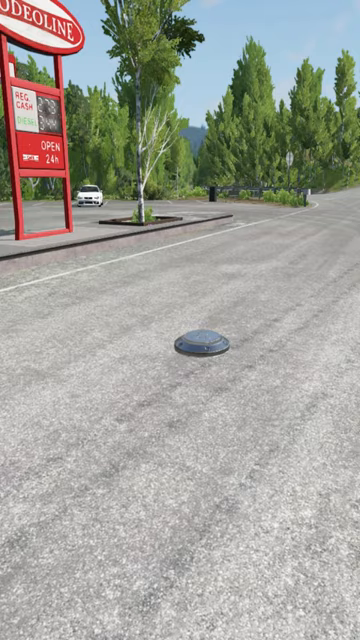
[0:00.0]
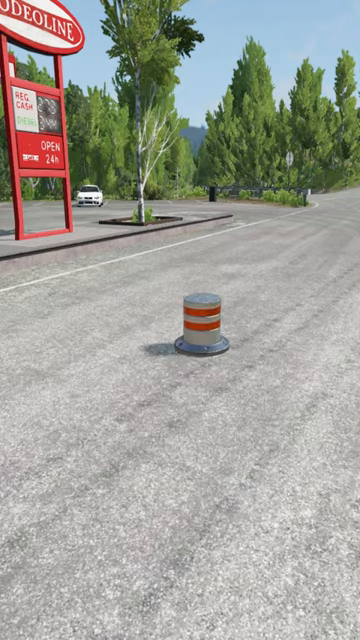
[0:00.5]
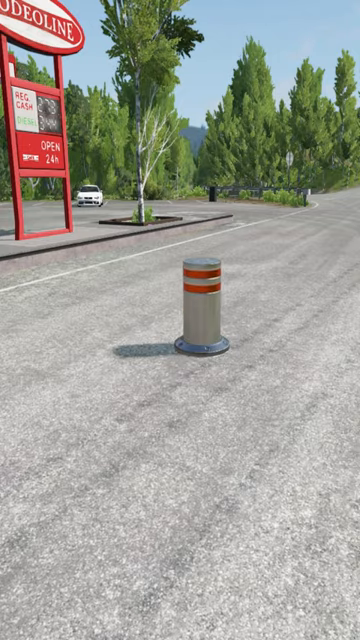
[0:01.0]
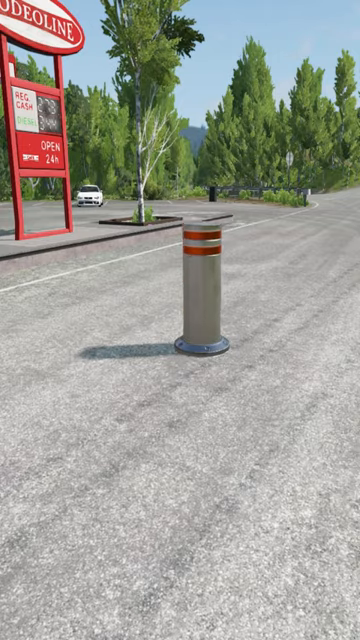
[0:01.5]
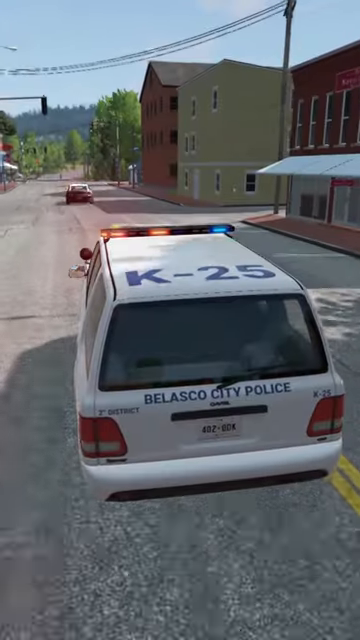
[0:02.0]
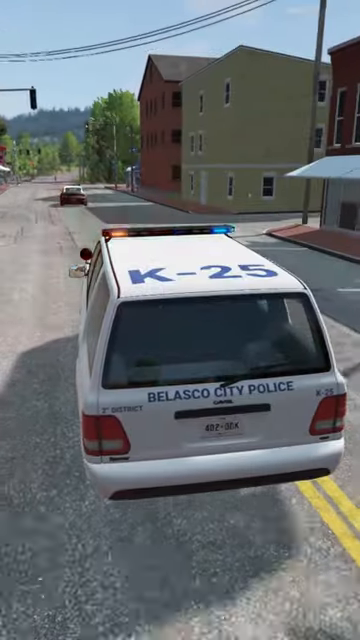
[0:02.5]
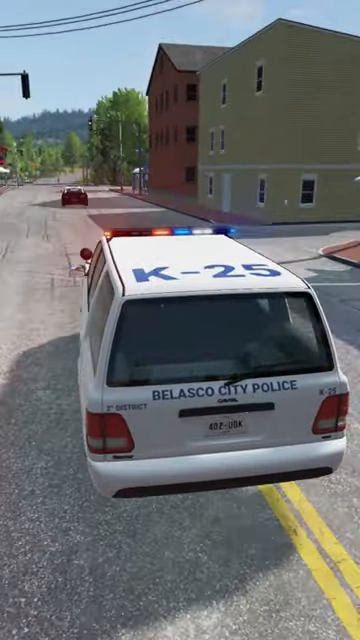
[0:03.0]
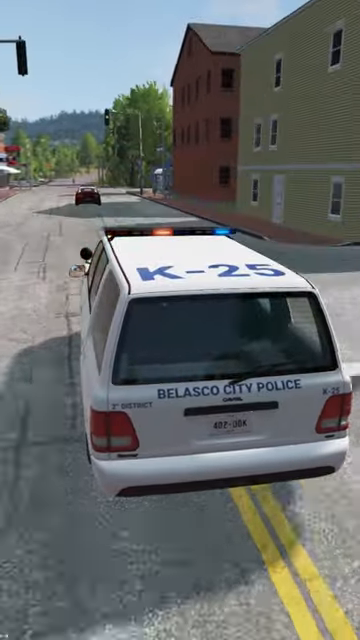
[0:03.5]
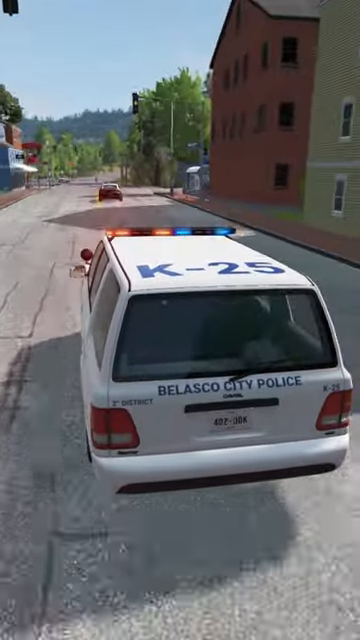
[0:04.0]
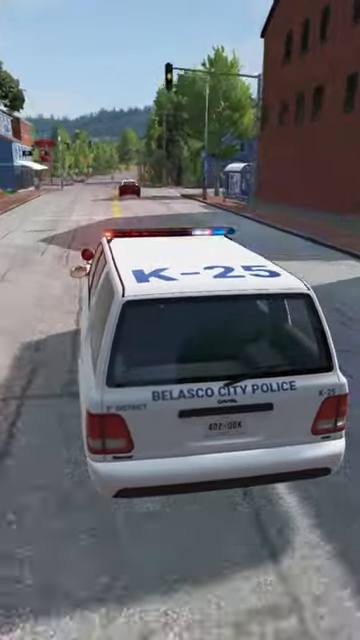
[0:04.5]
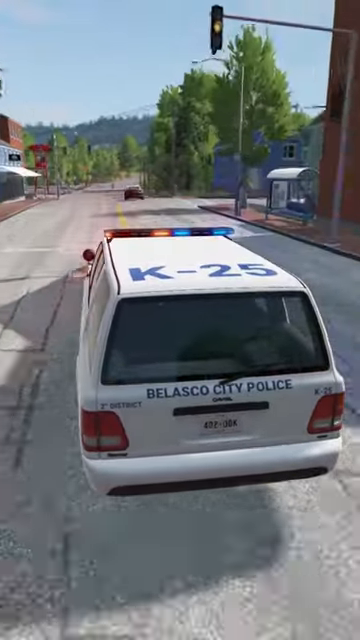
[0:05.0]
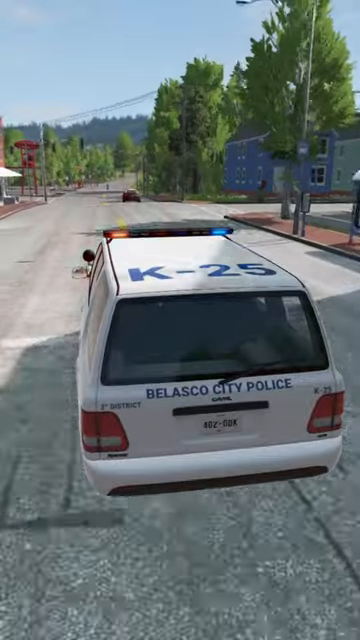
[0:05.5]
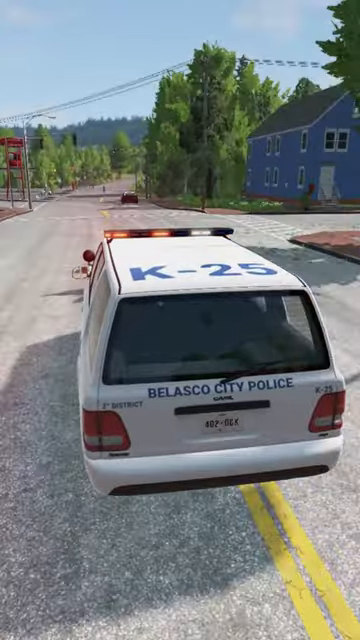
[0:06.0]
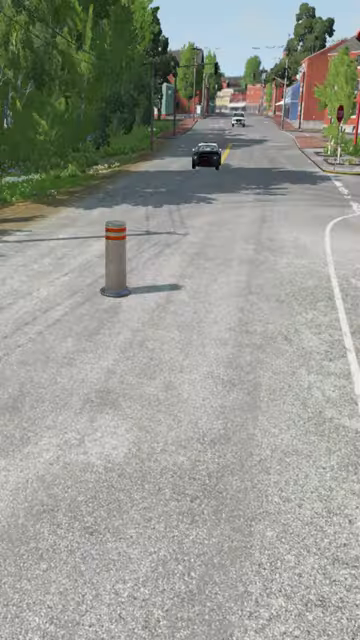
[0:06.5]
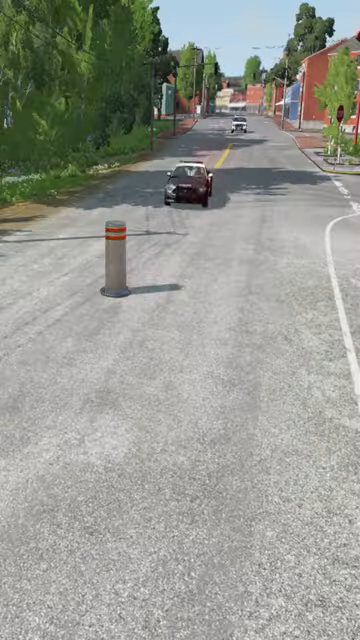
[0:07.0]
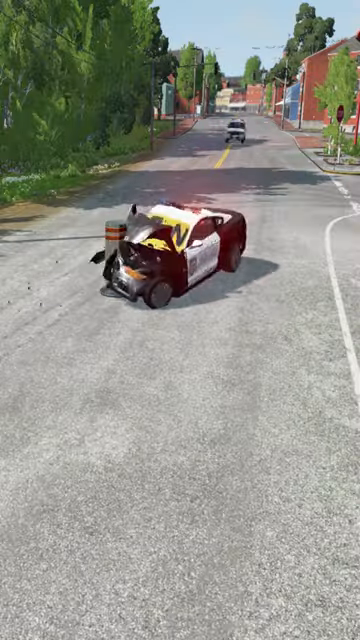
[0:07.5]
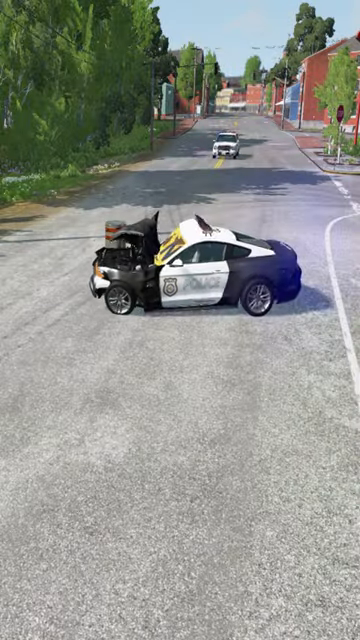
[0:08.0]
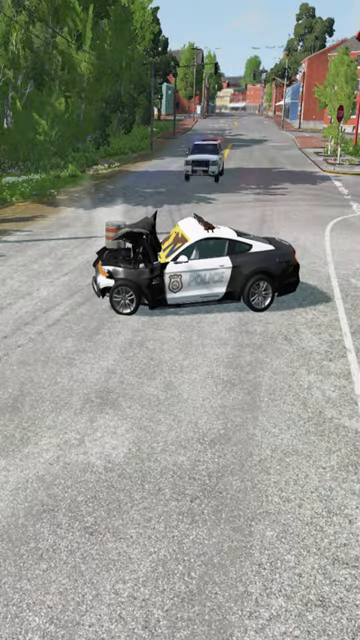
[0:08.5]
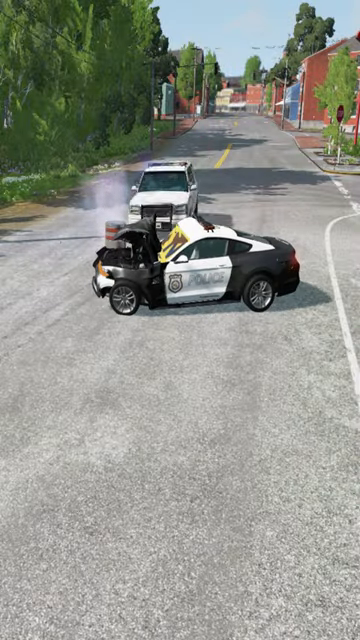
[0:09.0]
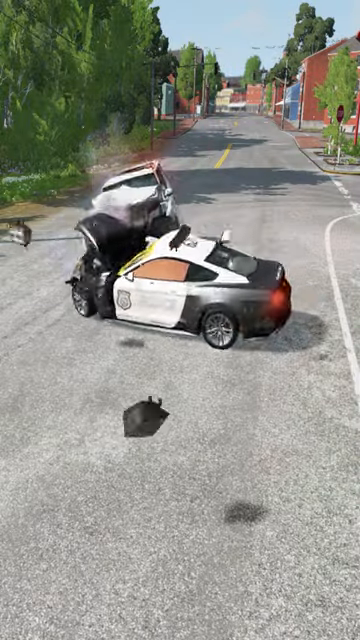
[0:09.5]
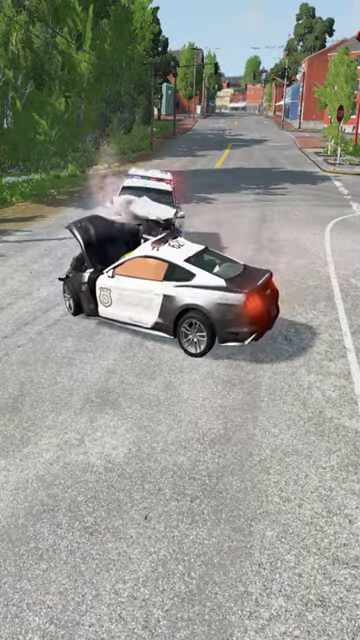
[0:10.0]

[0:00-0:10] The video, which is fake and animated, shows the text "police cars boulder crash." A police car bears the text "Belasco City Police," "K25" and "3rd district"; it looks like a mini SUV, and its license plate reads "4DZD6" or possibly "8K" (unclear). A white police car chases a black car with its sirens on, and the black car turns out to be another police car. Early on, a bollard suddenly emerges out of nowhere on the street, and the black police car hits it and is totaled. The white police car does not stop and also hits the bollard.